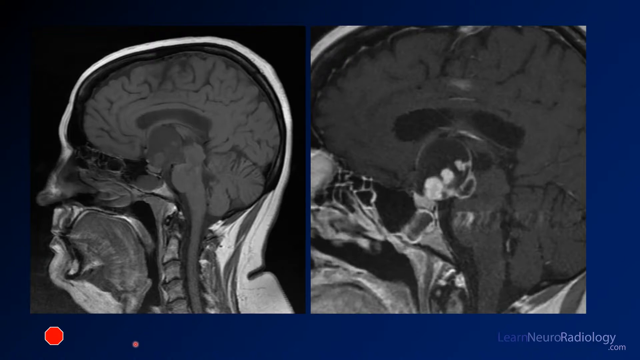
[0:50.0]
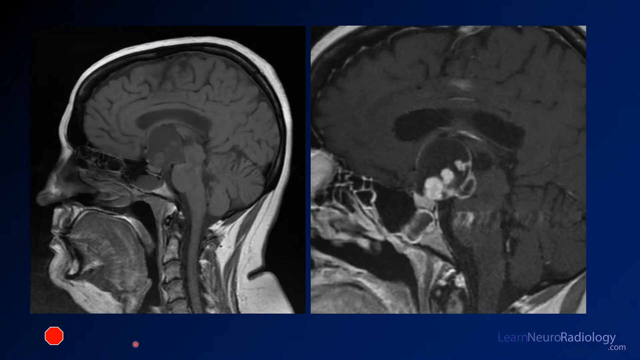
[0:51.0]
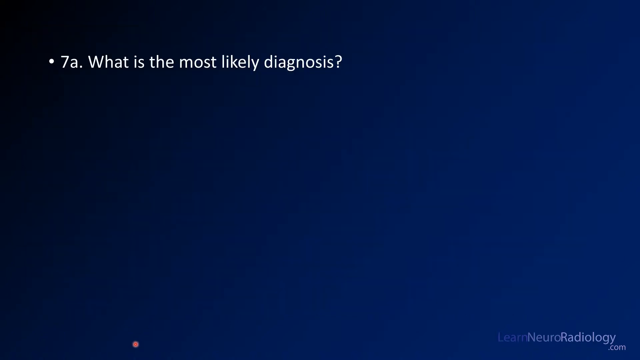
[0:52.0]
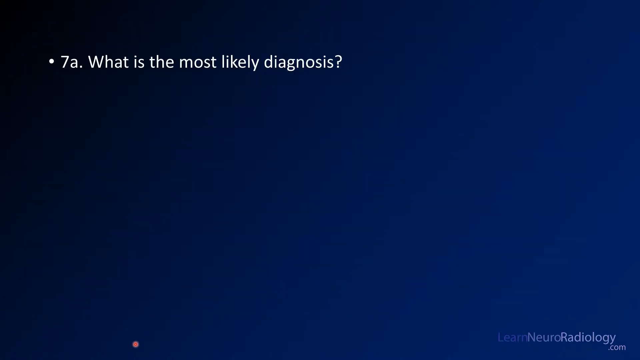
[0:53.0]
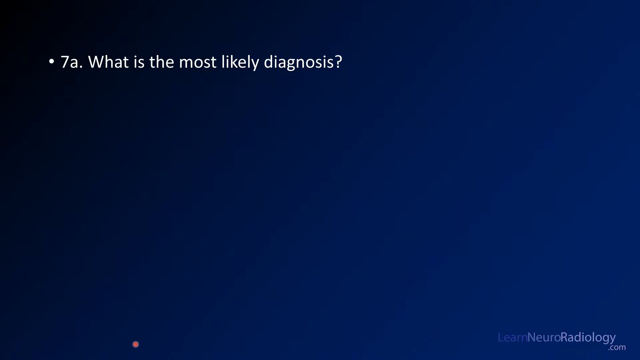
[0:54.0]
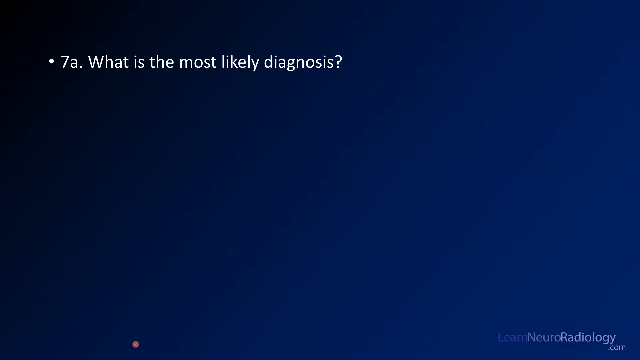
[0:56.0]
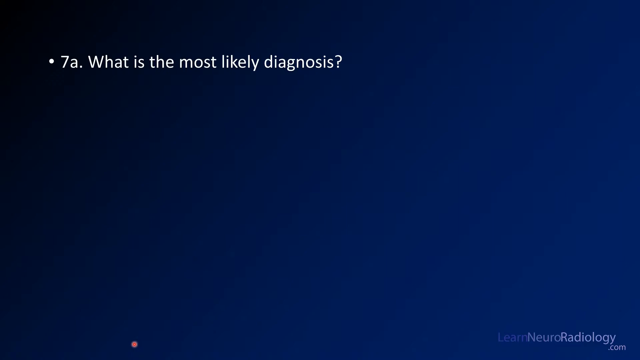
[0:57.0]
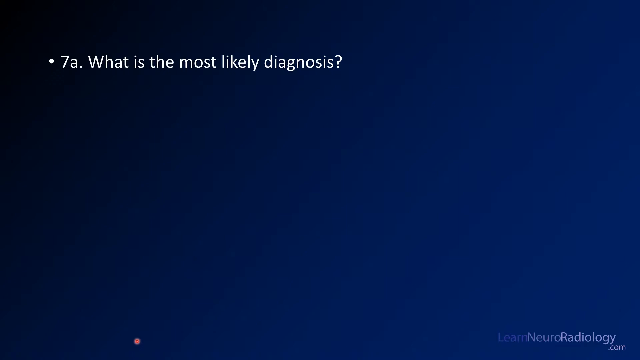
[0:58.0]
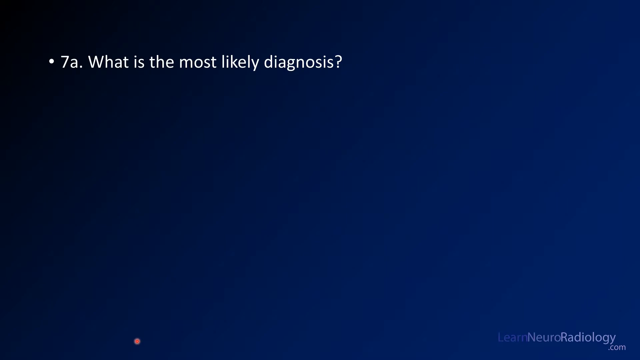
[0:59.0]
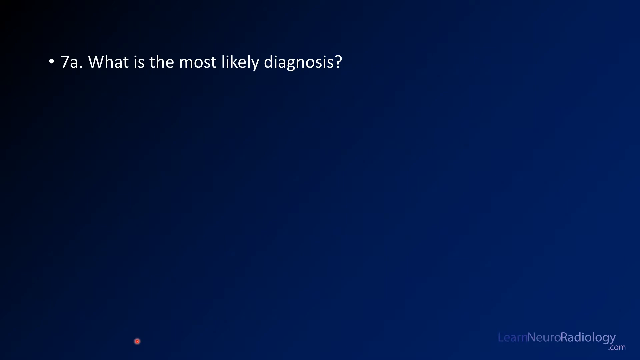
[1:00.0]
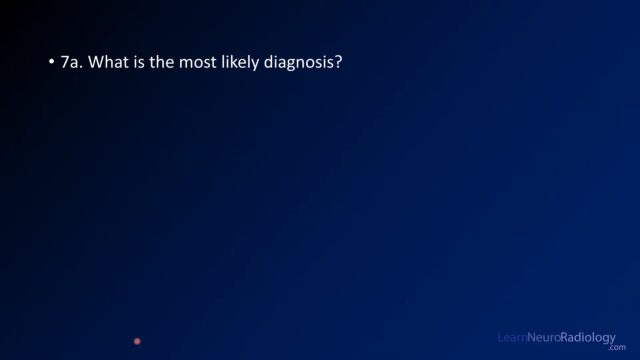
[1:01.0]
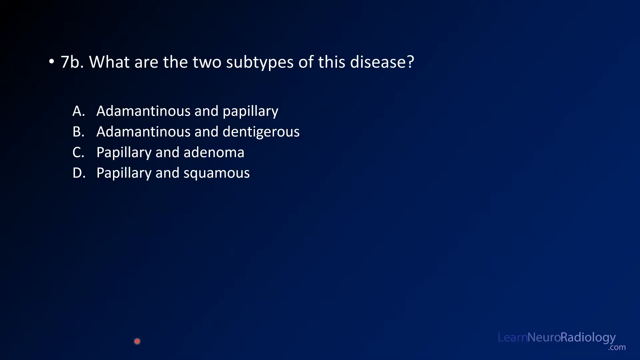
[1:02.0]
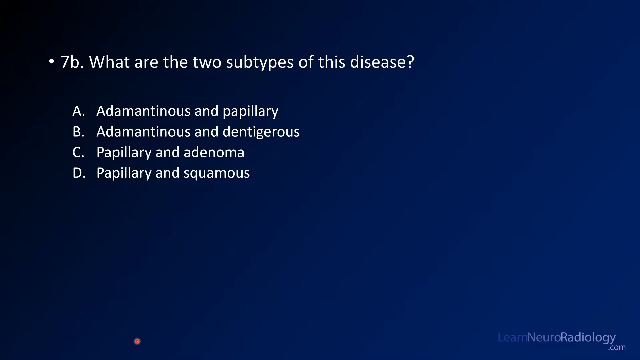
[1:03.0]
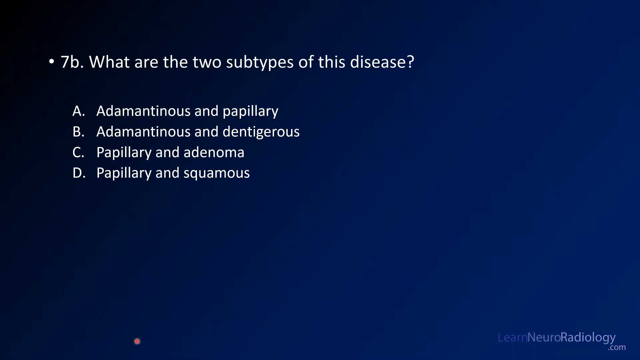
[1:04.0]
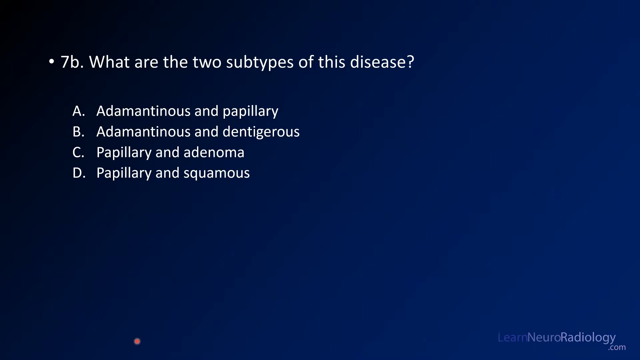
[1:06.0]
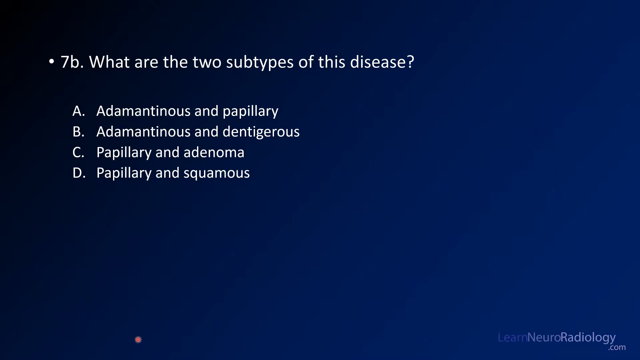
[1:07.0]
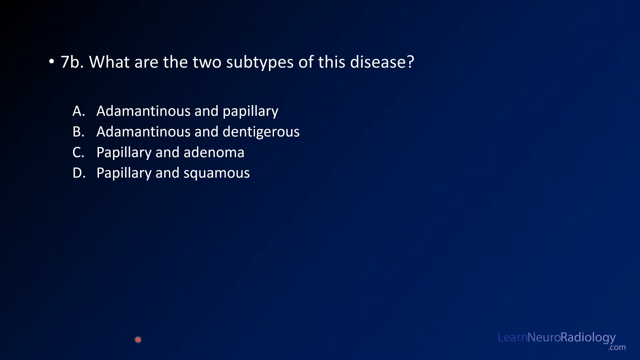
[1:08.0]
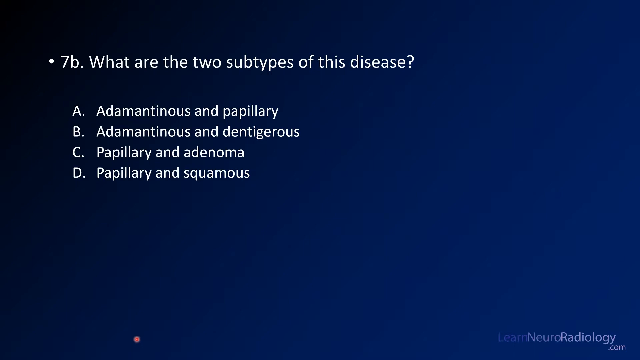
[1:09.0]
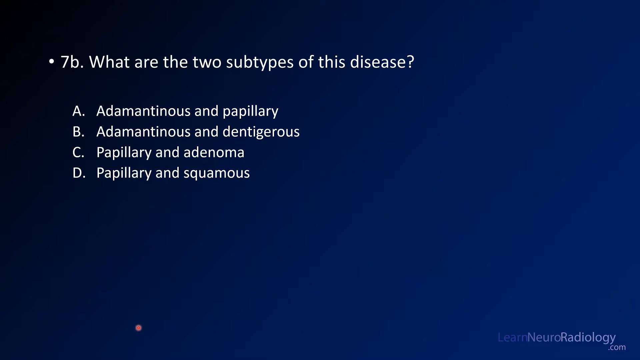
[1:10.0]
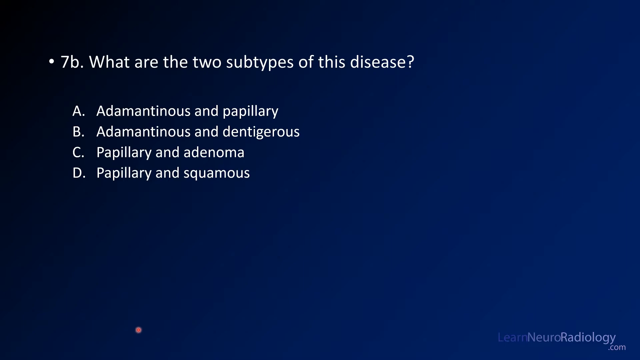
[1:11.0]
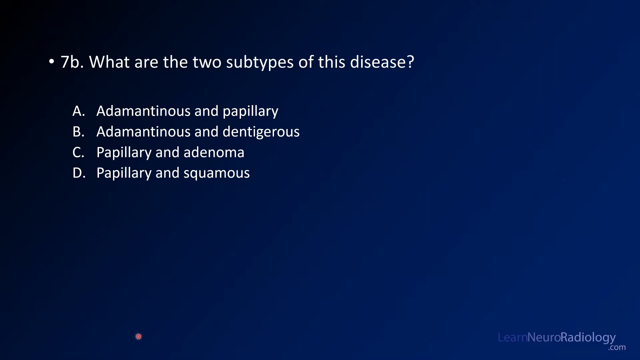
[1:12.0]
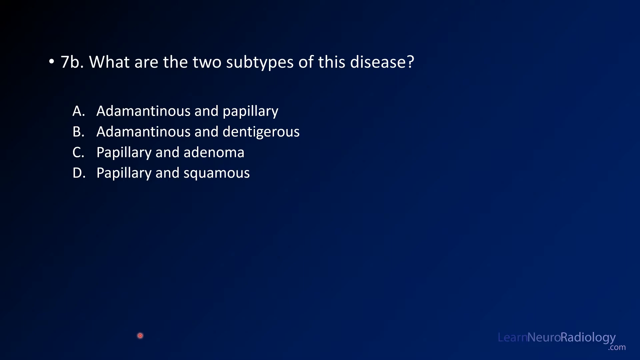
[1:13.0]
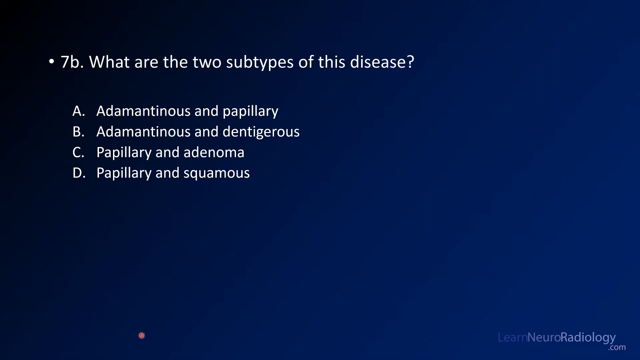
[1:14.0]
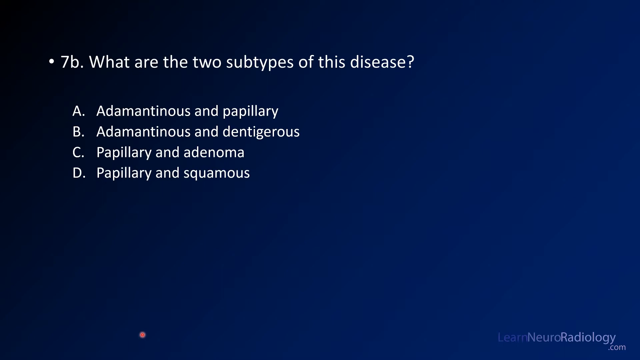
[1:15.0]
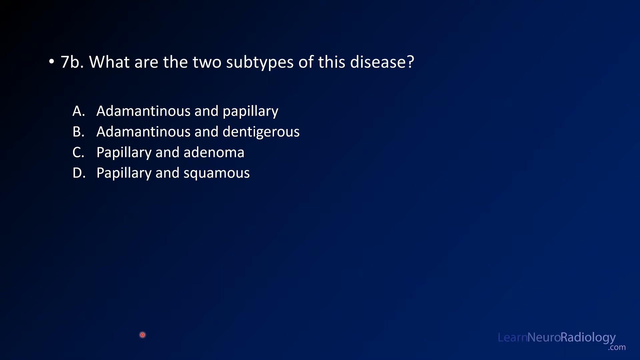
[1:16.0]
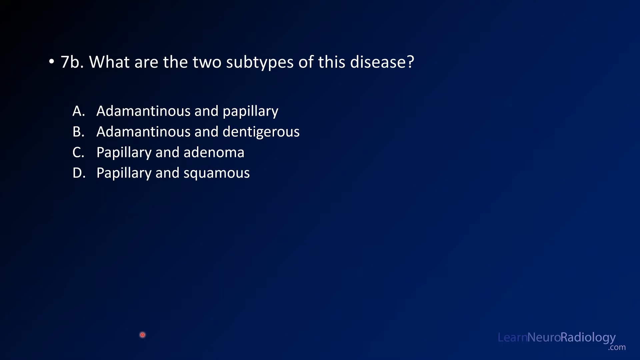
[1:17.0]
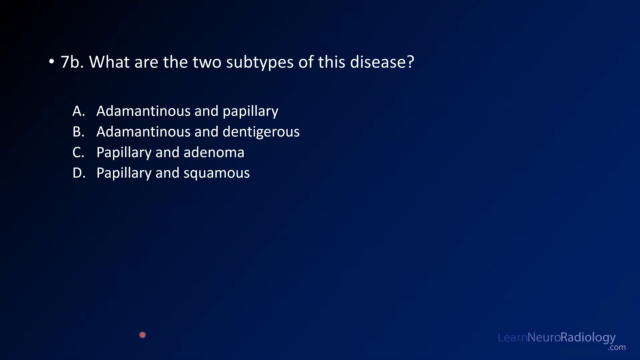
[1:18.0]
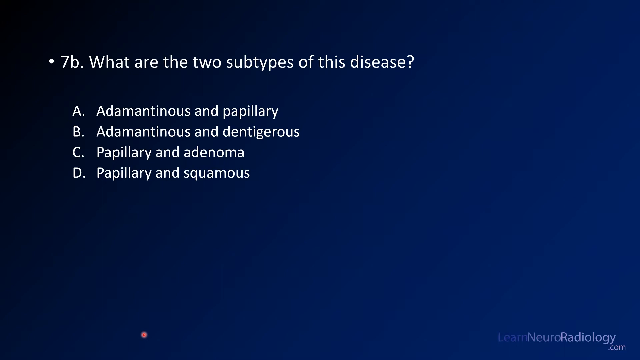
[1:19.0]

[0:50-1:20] The two images remain side by side on the navy blue background. They are MRI or CT scans of a brain. The left one gives a more overall look at the whole head, with the brain clearly visible inside, and the right one is a zoomed-in picture of the left one that seems to highlight an area of the brain that is lit up or white. The video then moves to a plain blue background with small white text reading "7a, what is the most likely diagnosis?" and "7b, what are the two subtypes of this disease?" followed by four options: "a, adamantinous and papillary," "b, adamantinous and dentiturous," "c, papillary and adenoma," and "d, papillary and squamous."